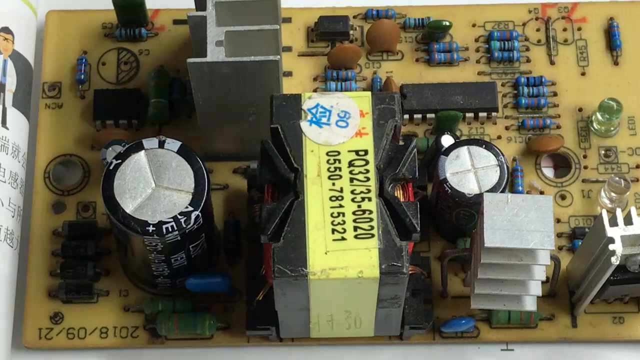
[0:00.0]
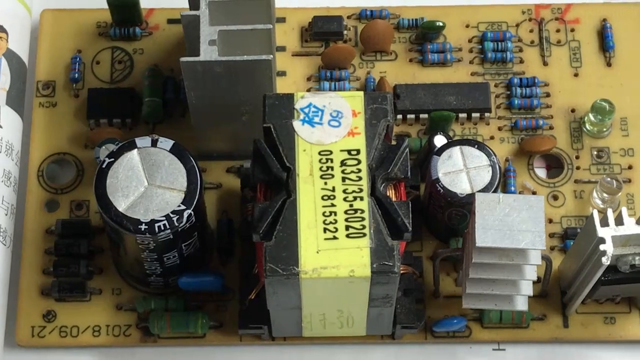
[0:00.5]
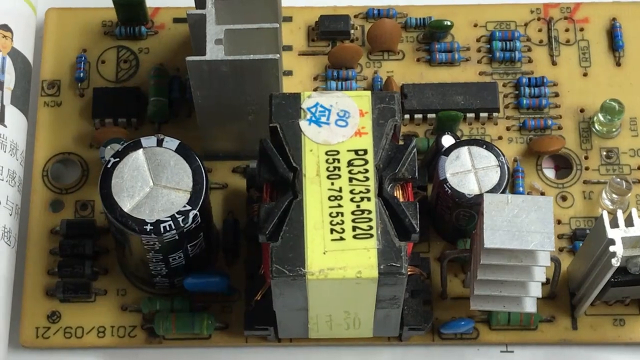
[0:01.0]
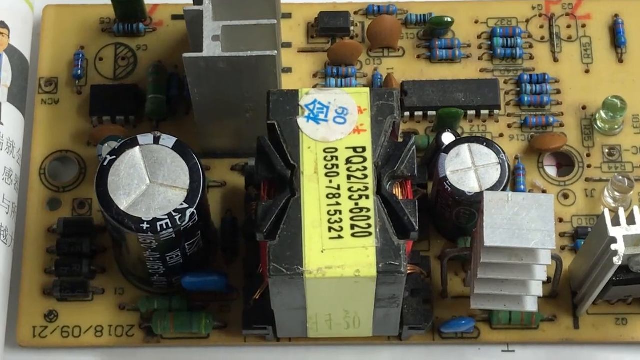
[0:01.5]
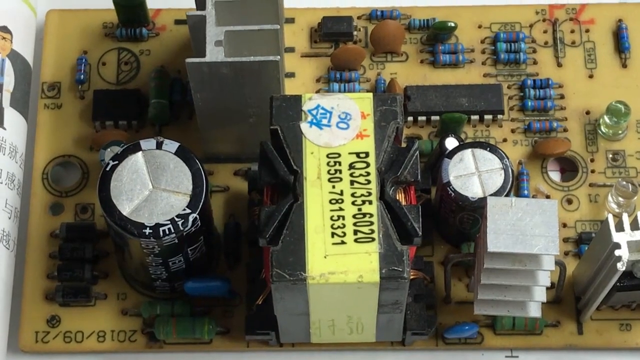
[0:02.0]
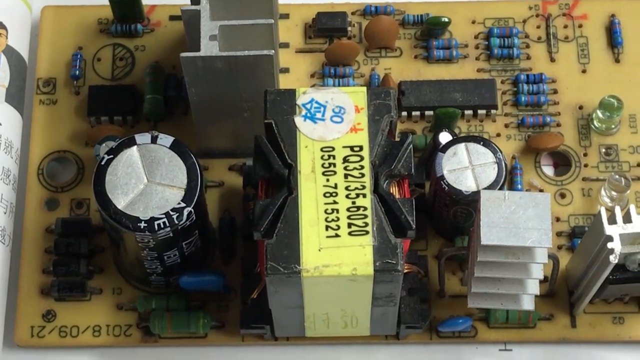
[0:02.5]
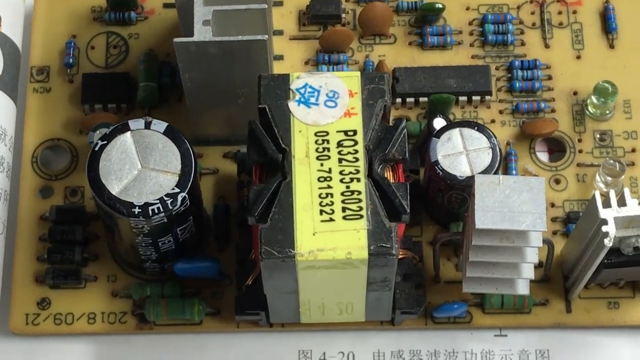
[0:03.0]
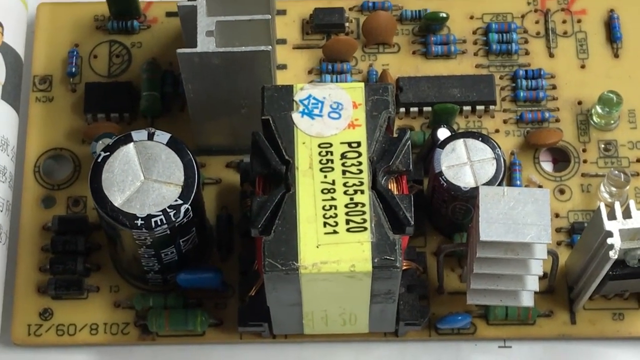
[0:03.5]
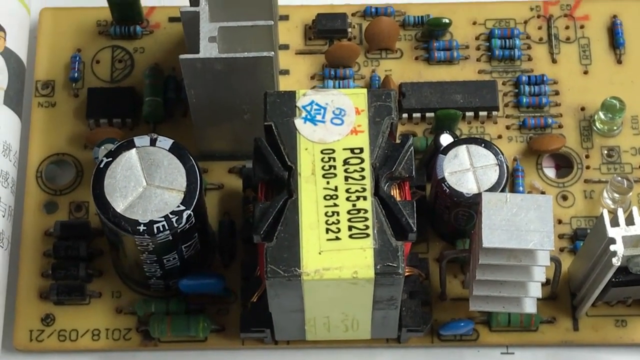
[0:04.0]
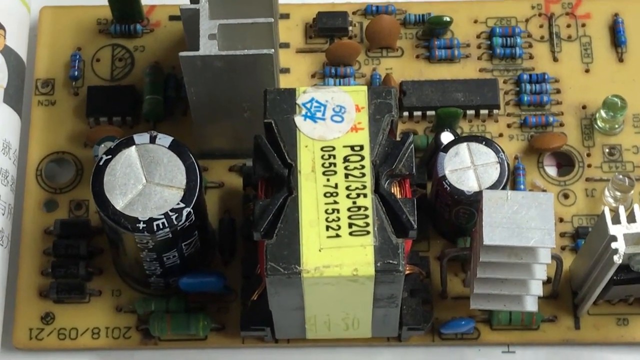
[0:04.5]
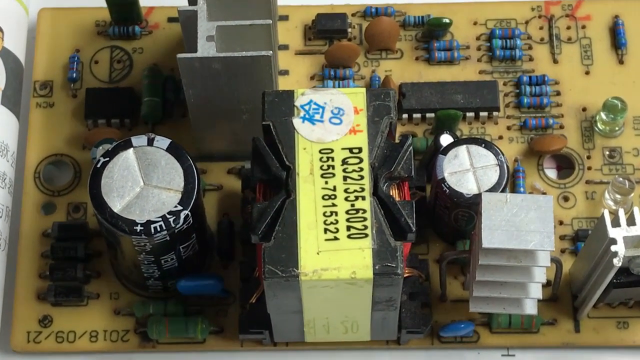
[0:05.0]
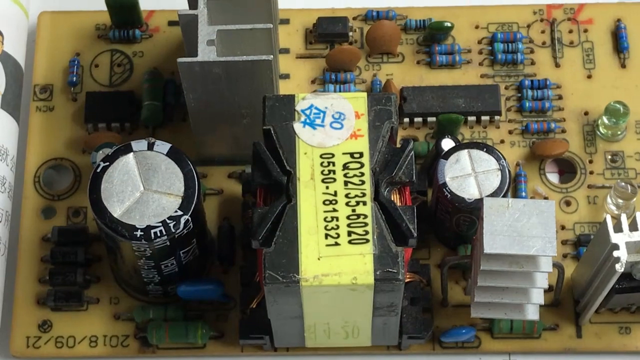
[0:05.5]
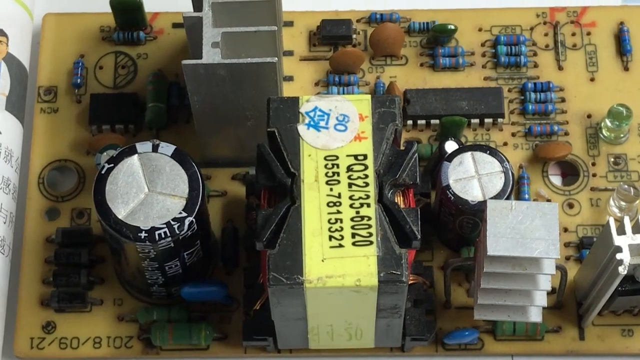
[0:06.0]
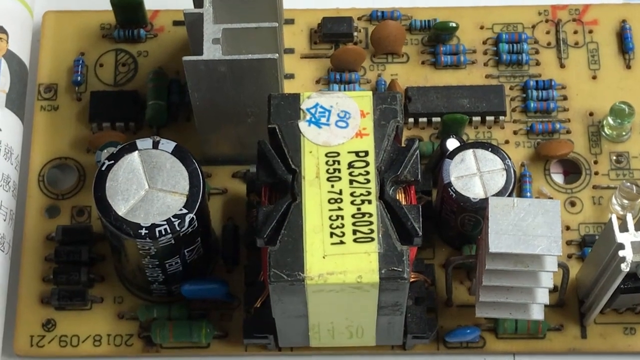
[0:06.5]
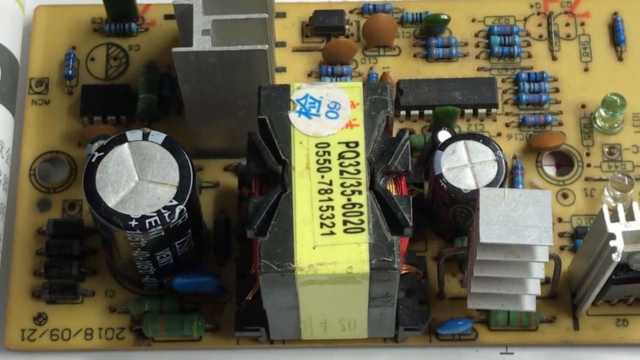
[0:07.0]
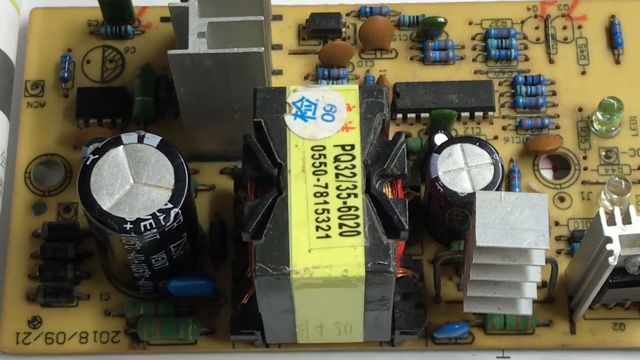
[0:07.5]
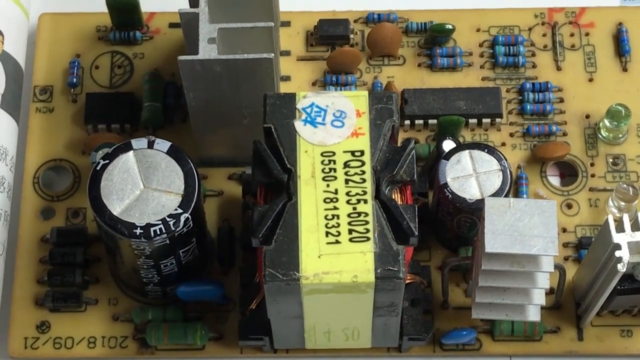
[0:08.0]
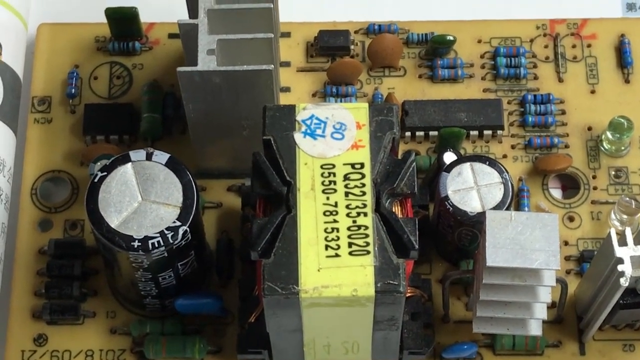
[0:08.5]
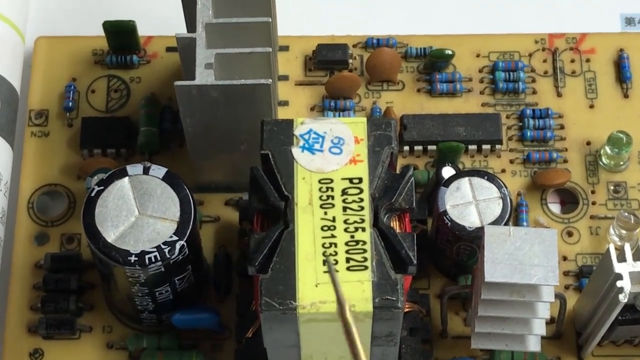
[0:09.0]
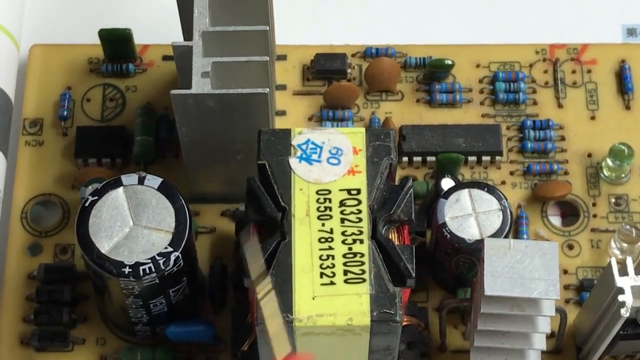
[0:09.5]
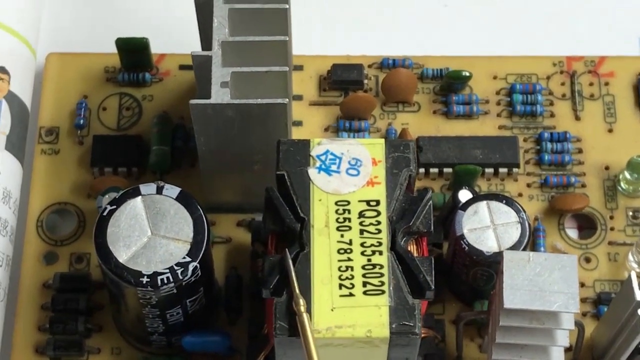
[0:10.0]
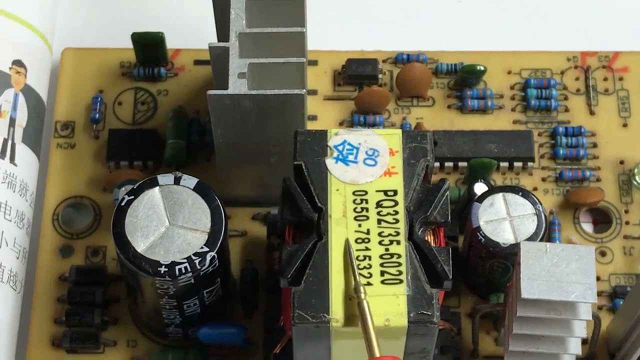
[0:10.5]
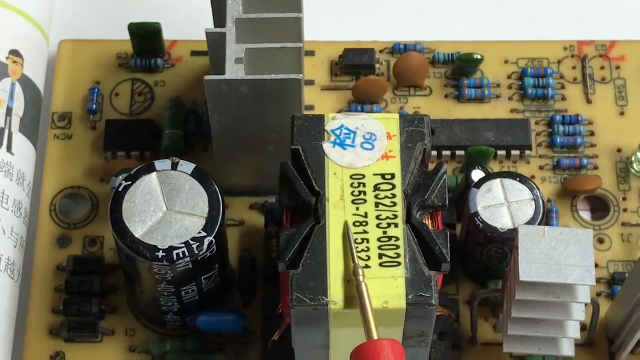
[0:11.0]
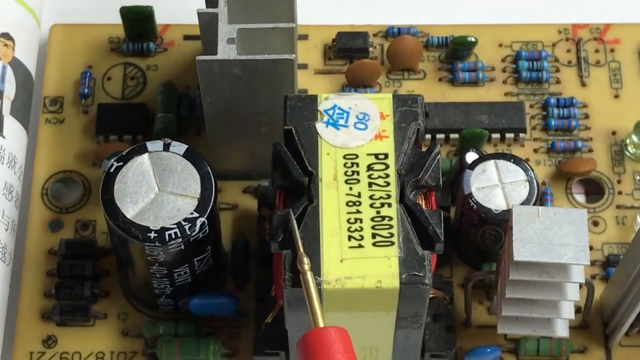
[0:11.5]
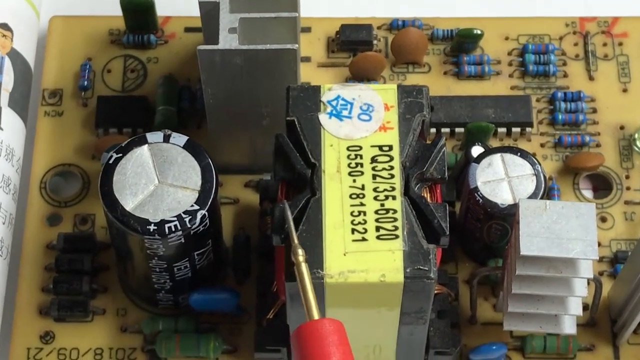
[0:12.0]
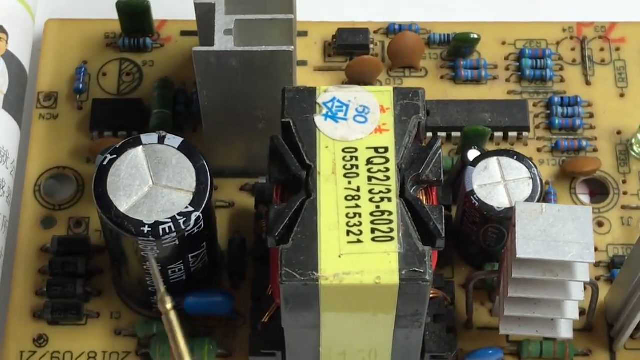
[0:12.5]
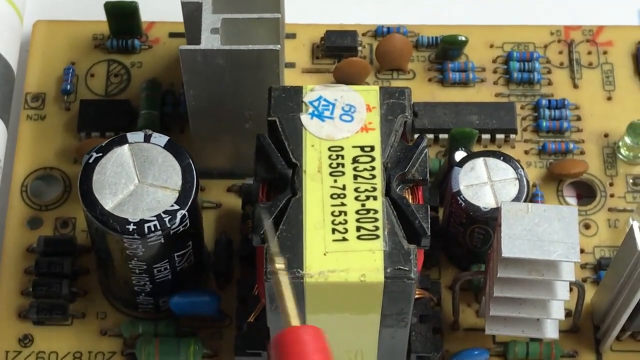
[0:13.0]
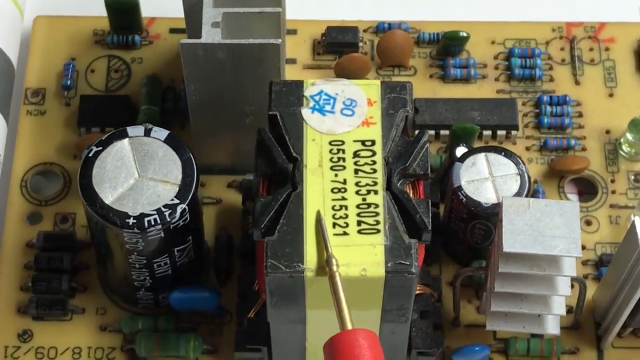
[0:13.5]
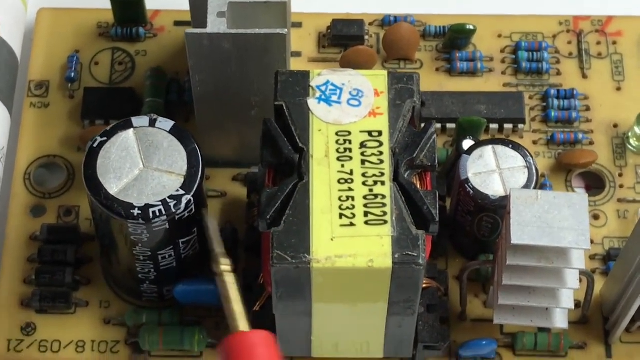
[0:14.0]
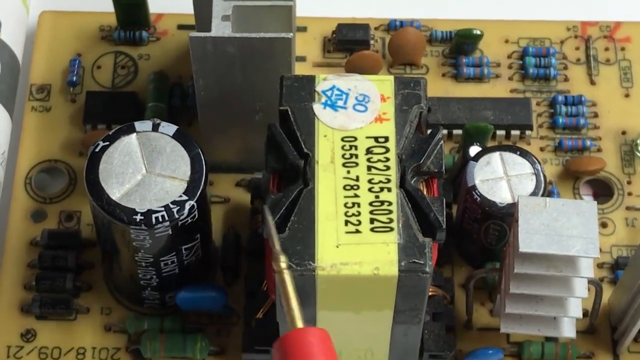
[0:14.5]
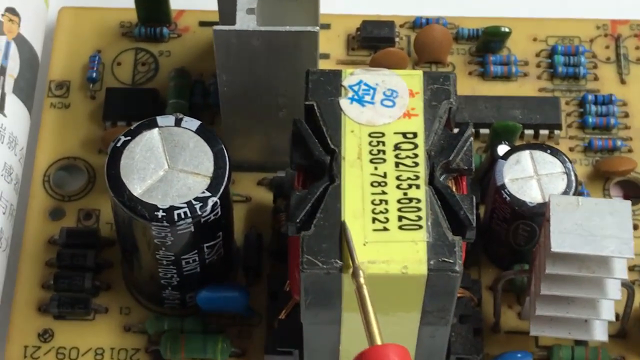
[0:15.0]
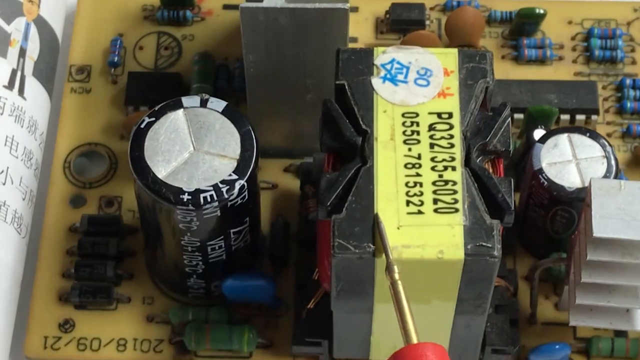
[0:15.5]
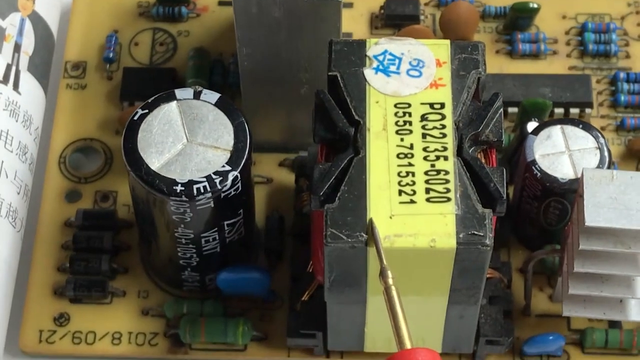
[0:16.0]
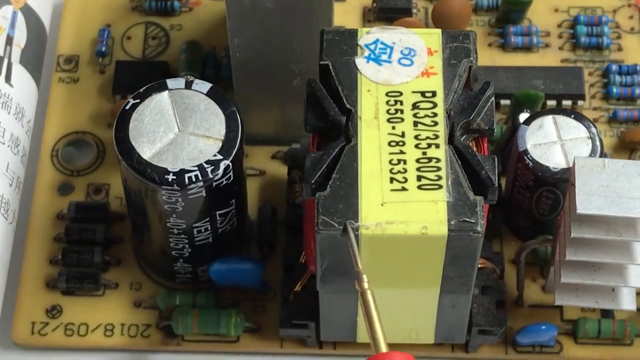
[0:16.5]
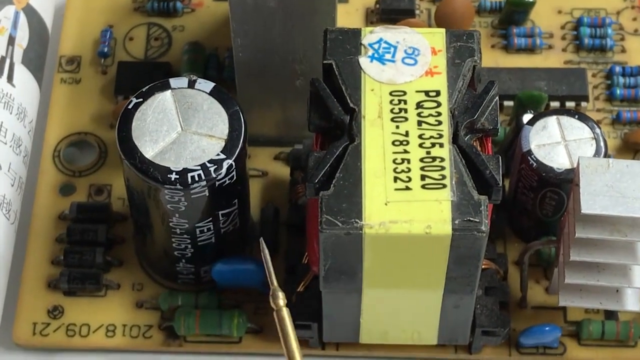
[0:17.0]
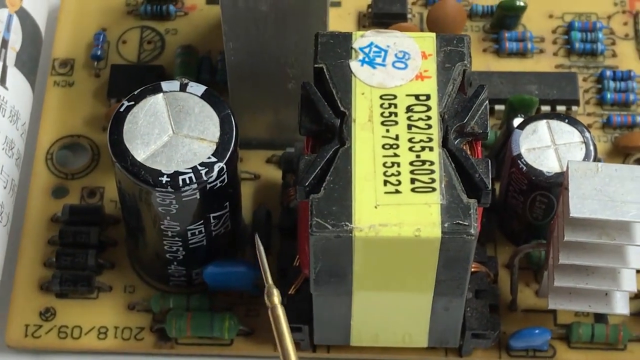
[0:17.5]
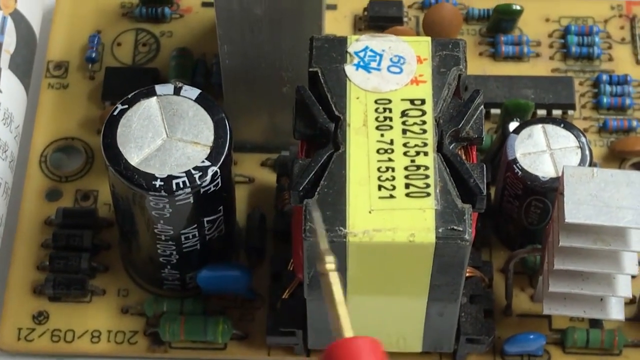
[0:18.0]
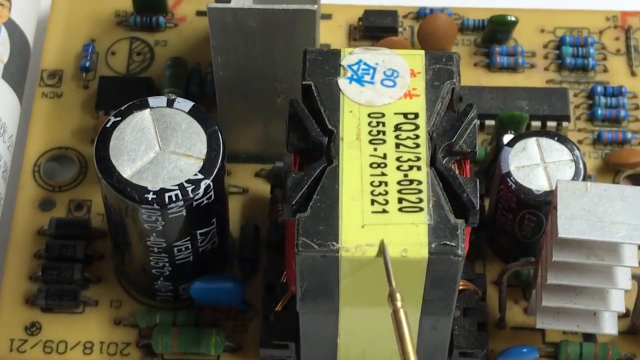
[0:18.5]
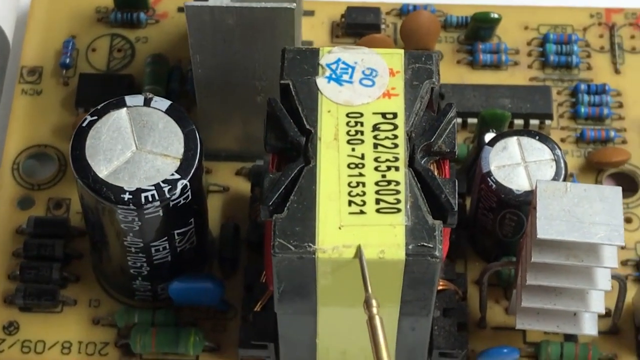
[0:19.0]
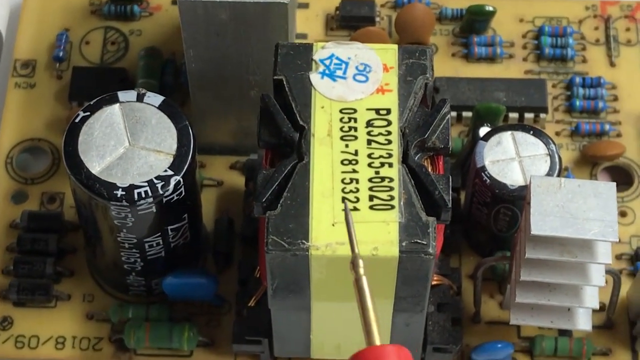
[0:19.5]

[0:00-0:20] The video appears to show a sort of circuit board, maybe for a computer or some other device. A big orange board holds a bunch of little circuits; some are blue and some are brown. On the bottom left is a big black, battery-looking thing, and in the middle is a yellow thing with a bunch of numbers and letters on it. To the right of that thing is a sort of battery, and there is also some sort of metal plate. On the left-hand side part of a book is visible, with Chinese characters and a cartoon-type character who looks like a scientist. Someone holds a red sort of screwdriver, motioning over the board.